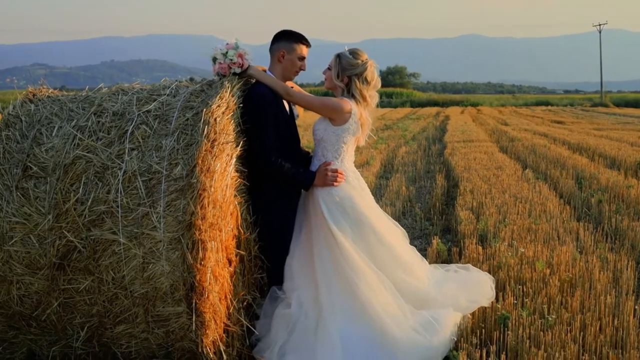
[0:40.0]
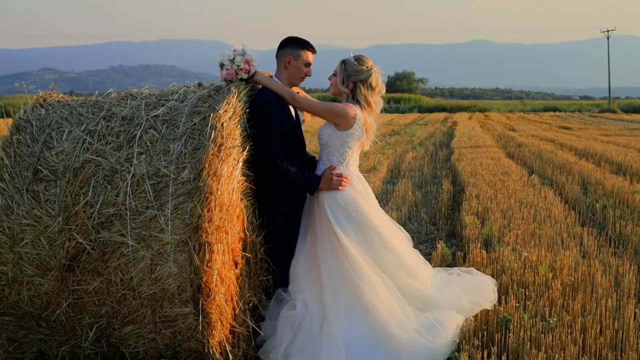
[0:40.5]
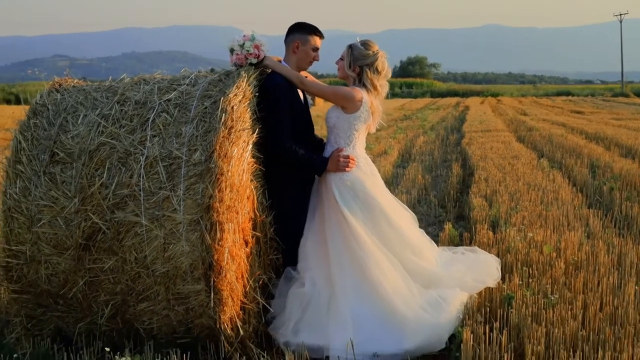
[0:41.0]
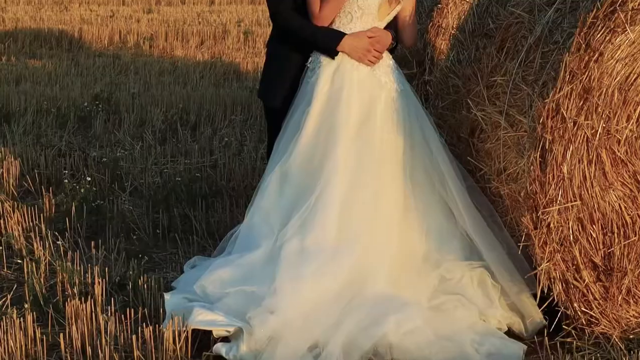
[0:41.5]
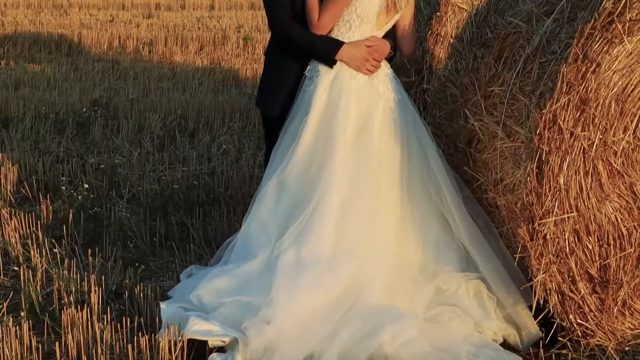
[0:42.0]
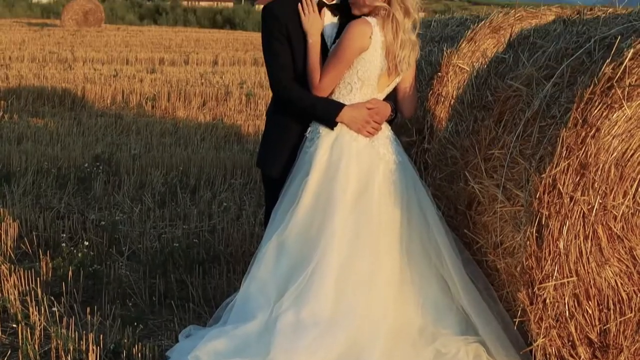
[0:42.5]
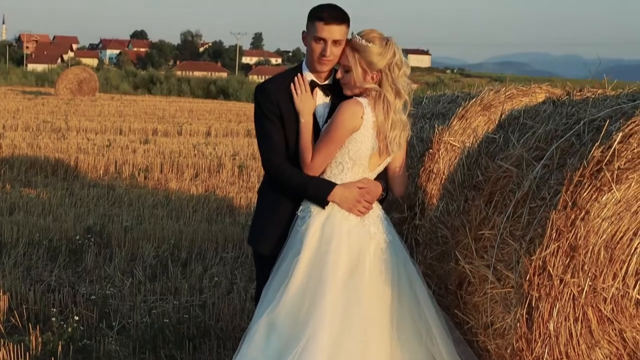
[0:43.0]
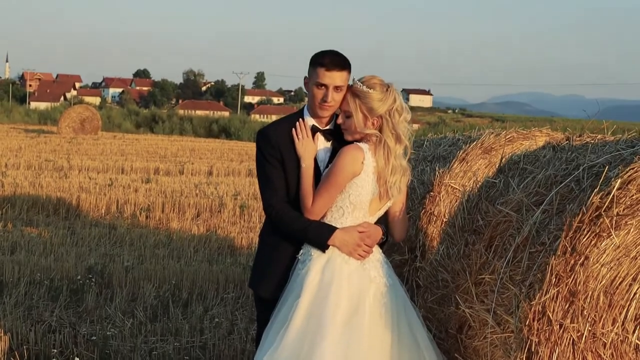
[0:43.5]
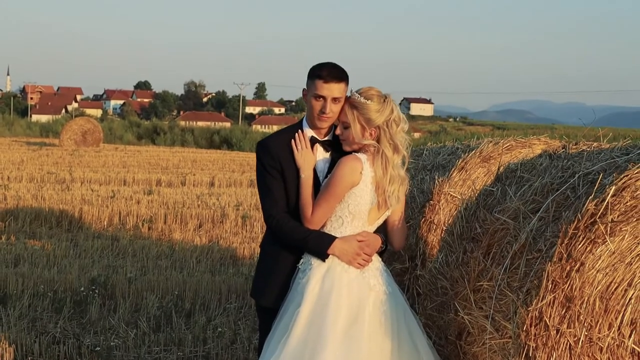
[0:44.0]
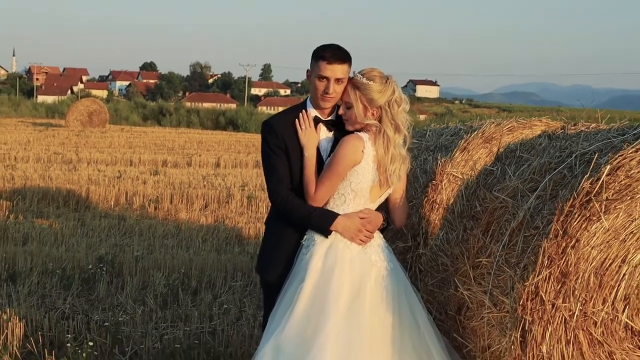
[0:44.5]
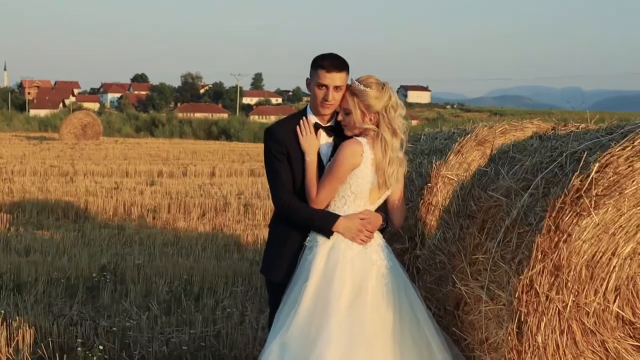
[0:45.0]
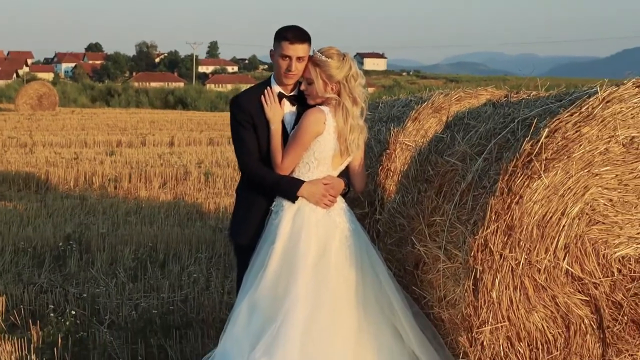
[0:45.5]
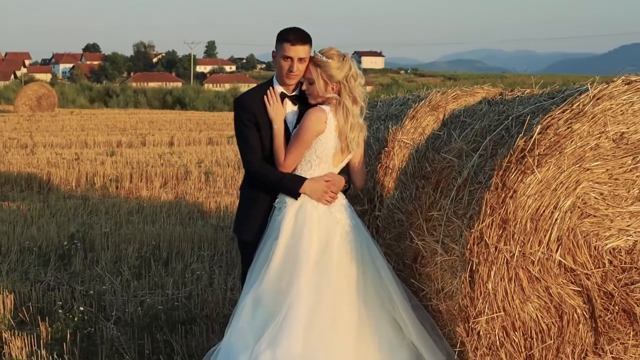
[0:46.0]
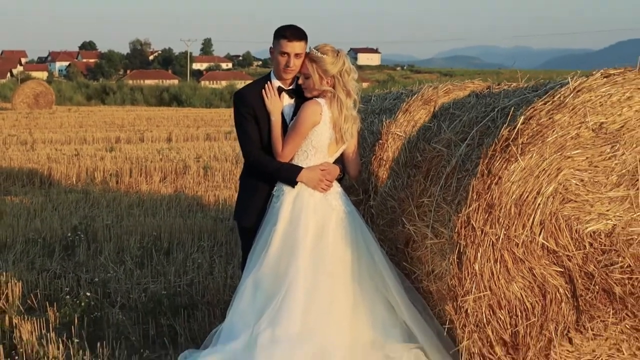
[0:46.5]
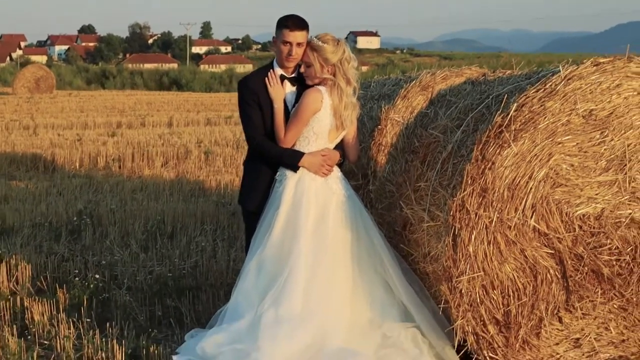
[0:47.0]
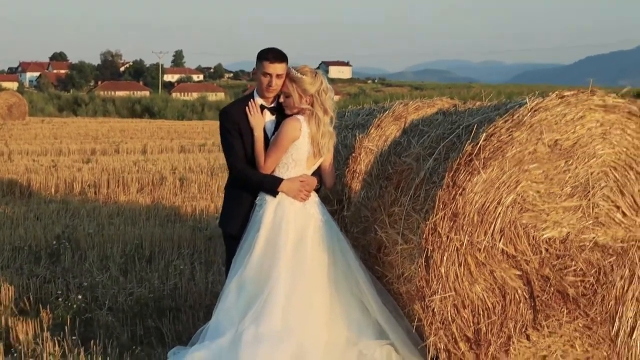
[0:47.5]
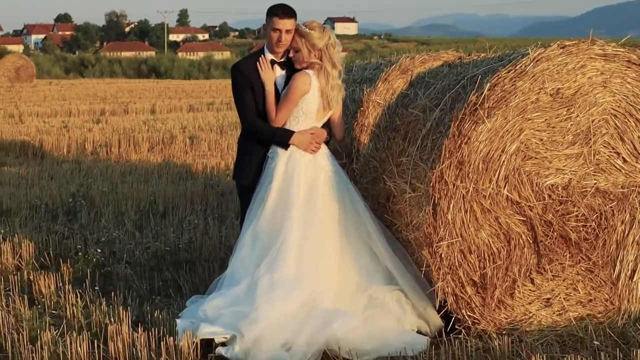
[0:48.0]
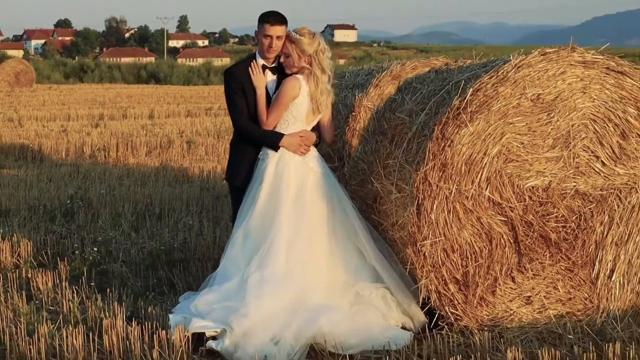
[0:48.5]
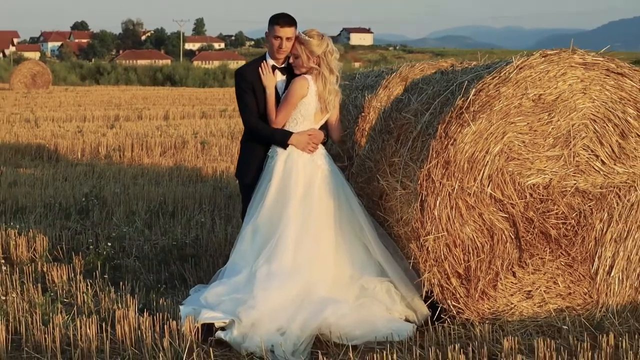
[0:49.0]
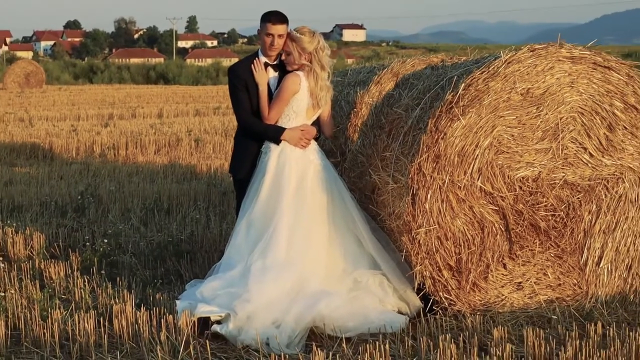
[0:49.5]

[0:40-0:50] The husband holds her while she has her hand and her head on his chest, and he gazes at her. They are next to a bale of hay in a field, with mountains in the background. The sun looks like it is coming down in the background, and it is beginning to look like dusk. The wedding dress is fanned out behind her.